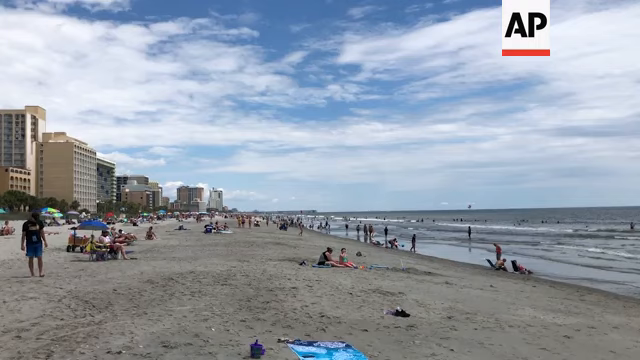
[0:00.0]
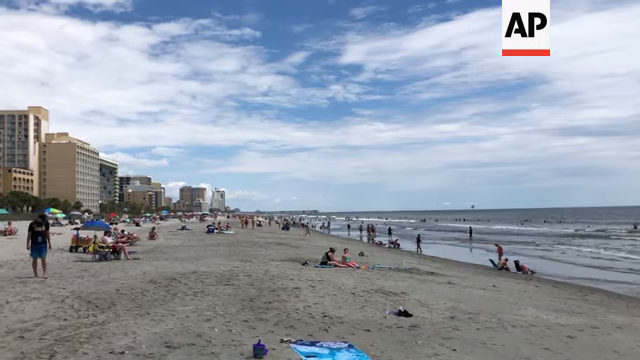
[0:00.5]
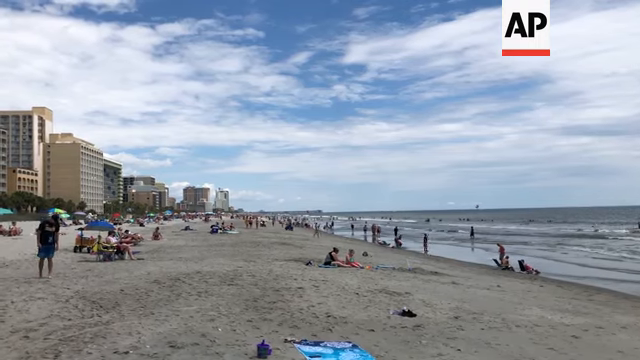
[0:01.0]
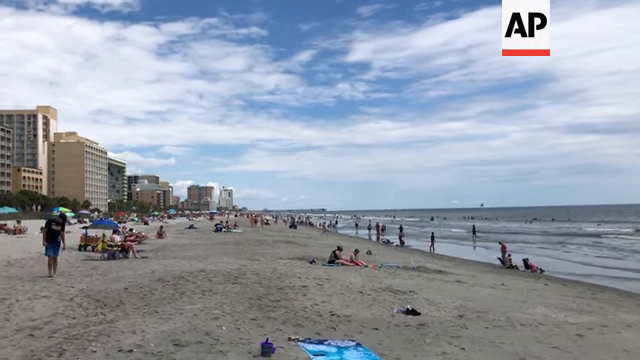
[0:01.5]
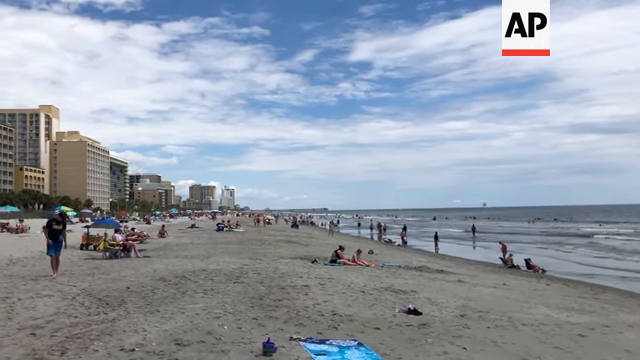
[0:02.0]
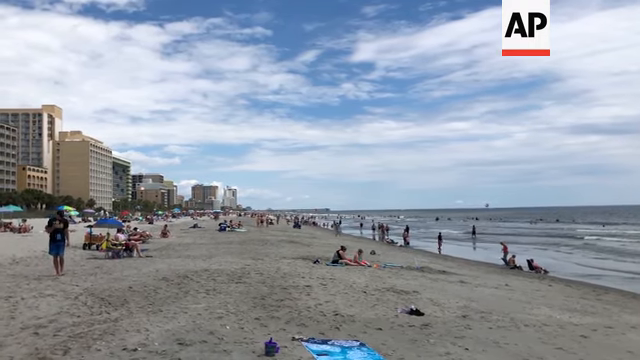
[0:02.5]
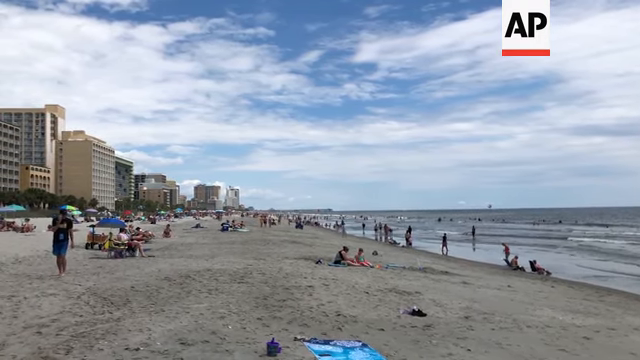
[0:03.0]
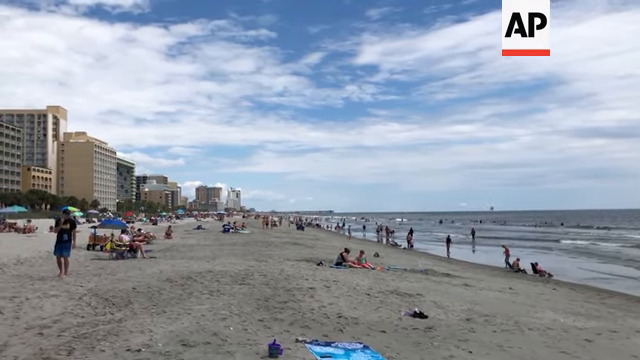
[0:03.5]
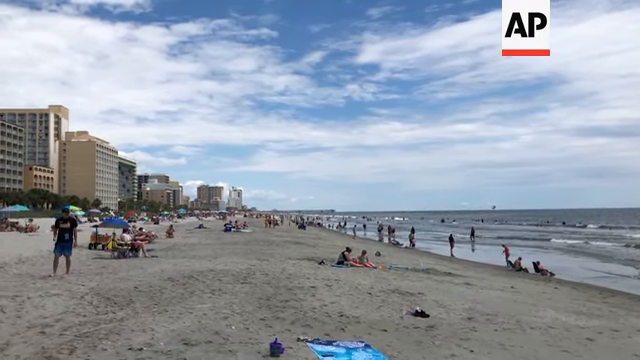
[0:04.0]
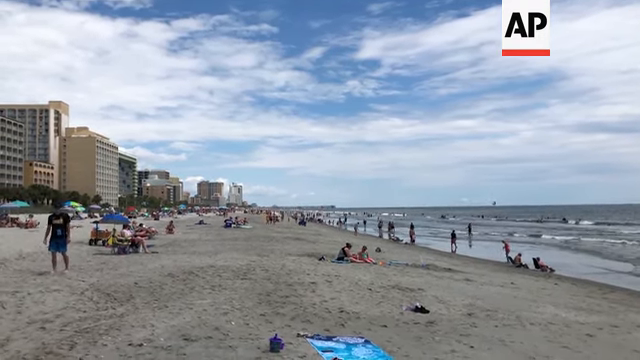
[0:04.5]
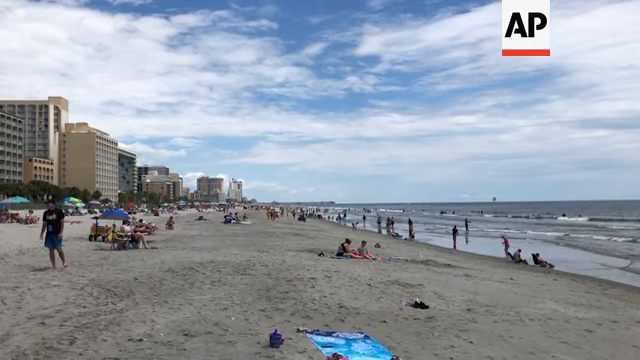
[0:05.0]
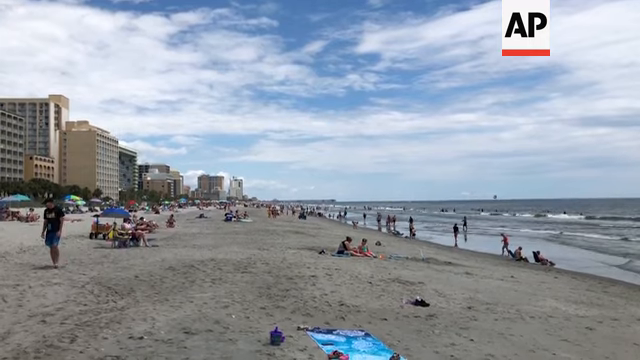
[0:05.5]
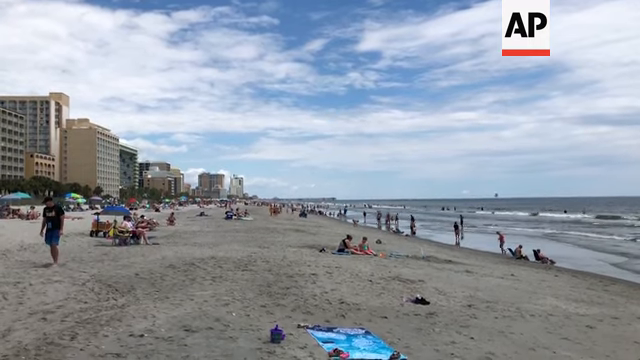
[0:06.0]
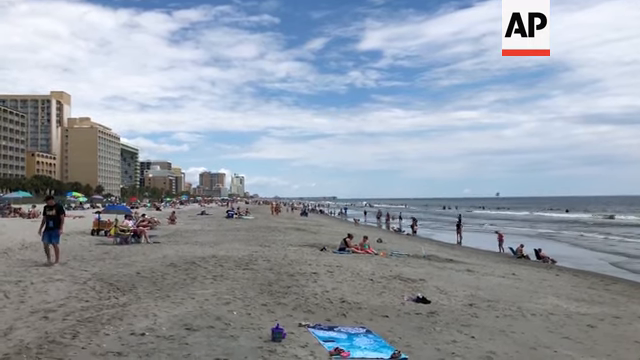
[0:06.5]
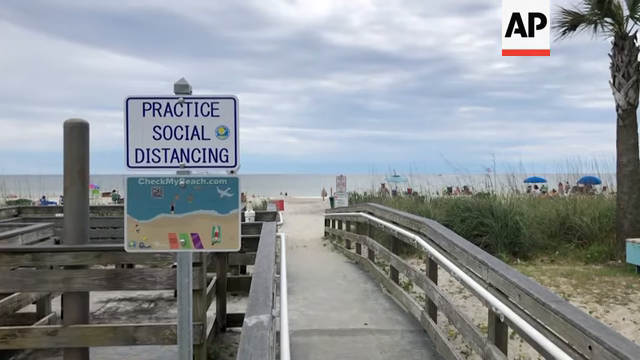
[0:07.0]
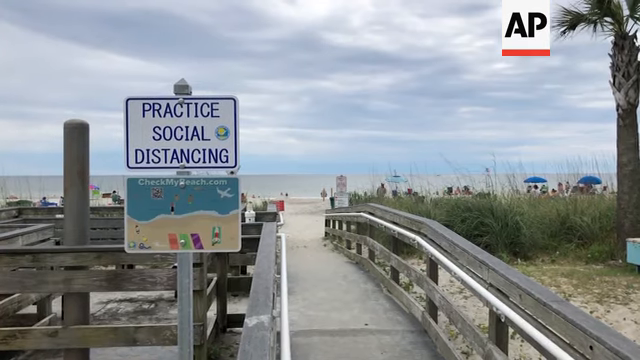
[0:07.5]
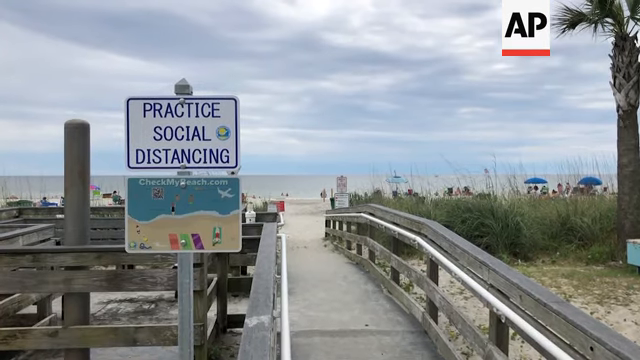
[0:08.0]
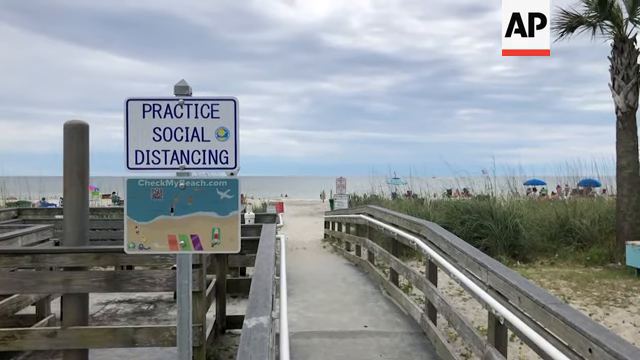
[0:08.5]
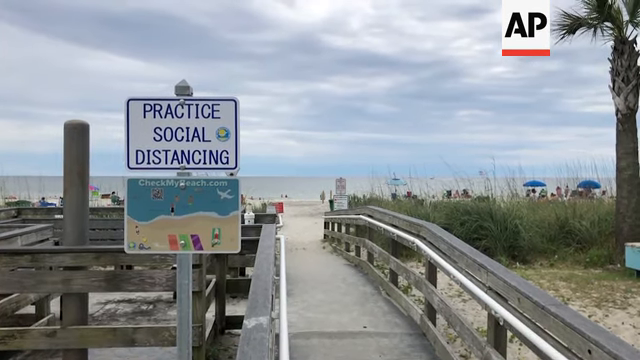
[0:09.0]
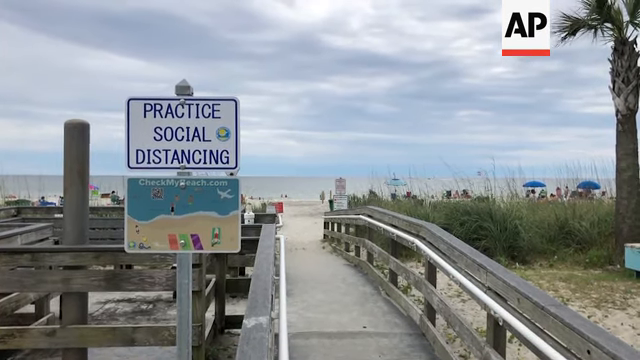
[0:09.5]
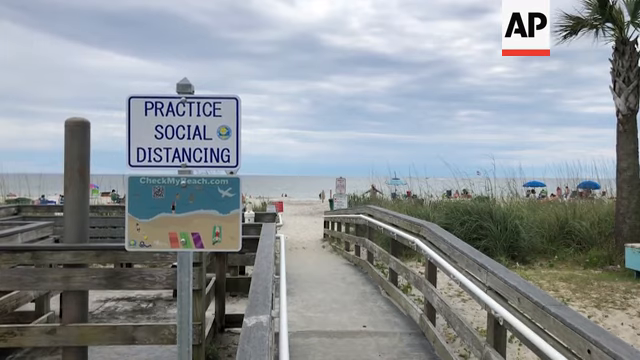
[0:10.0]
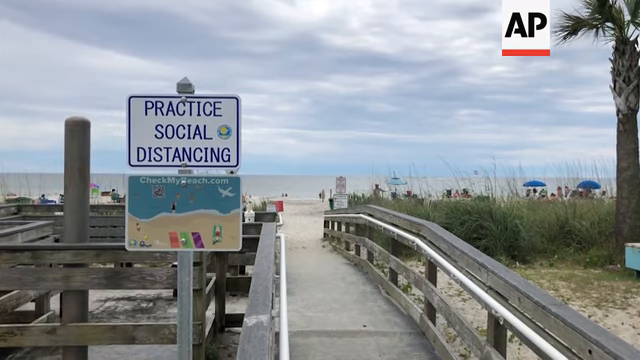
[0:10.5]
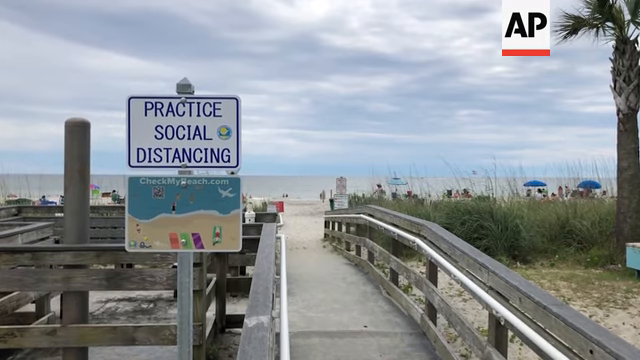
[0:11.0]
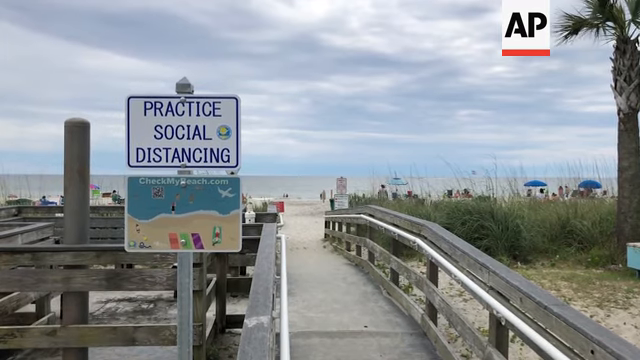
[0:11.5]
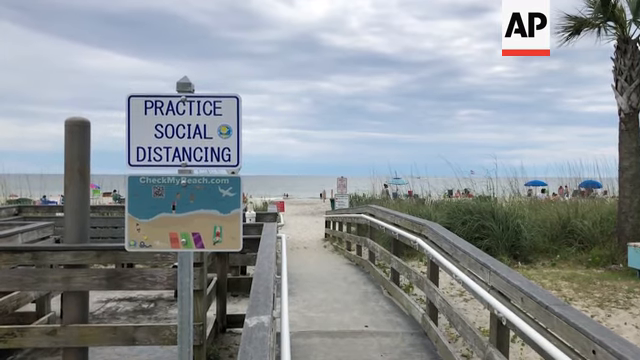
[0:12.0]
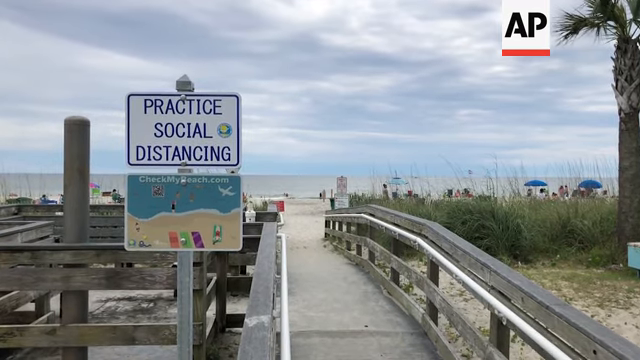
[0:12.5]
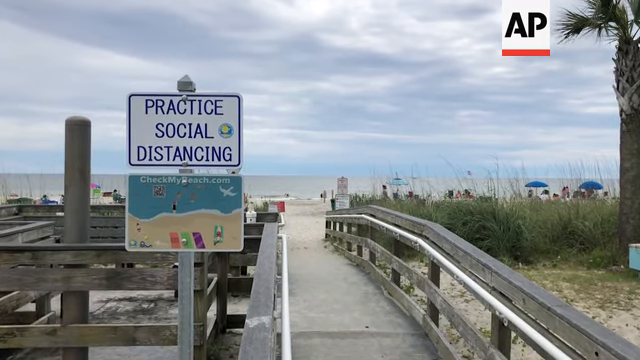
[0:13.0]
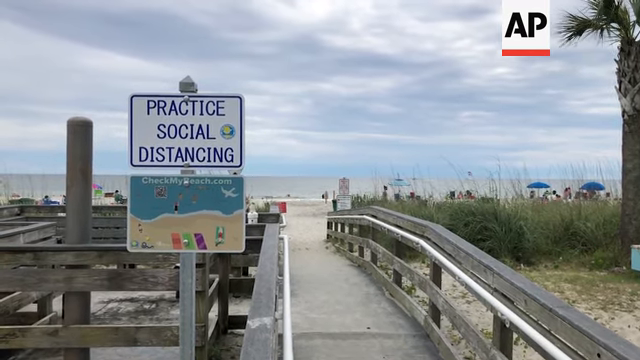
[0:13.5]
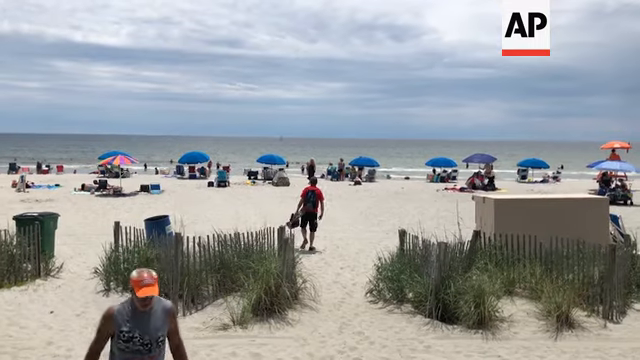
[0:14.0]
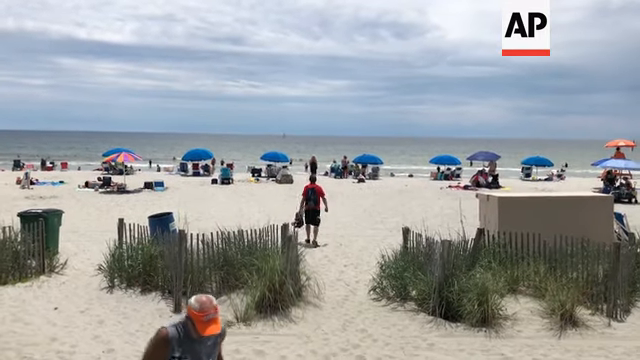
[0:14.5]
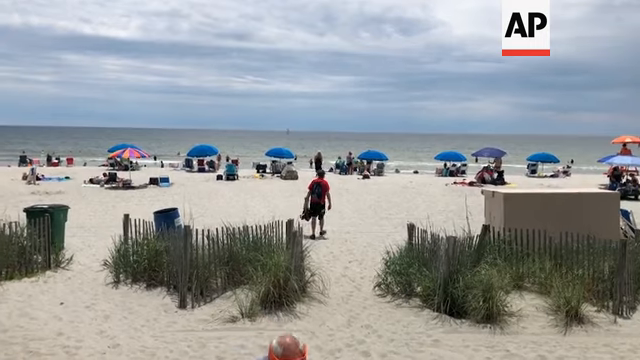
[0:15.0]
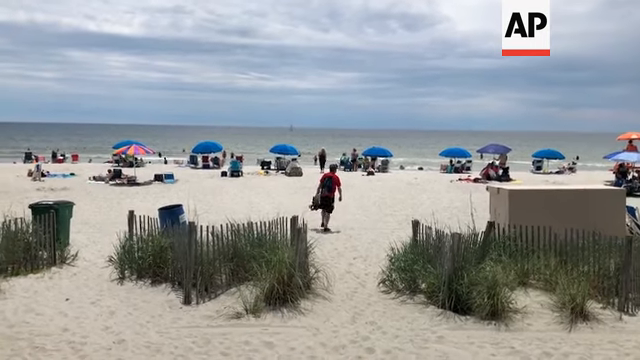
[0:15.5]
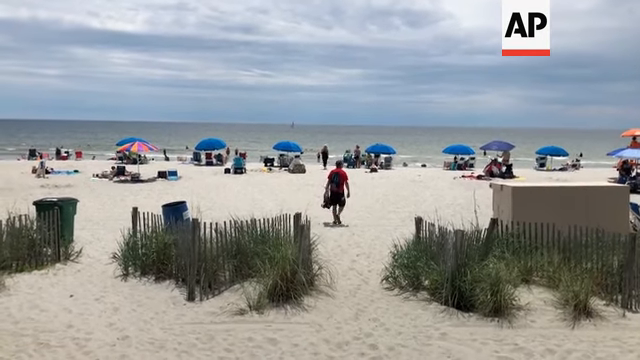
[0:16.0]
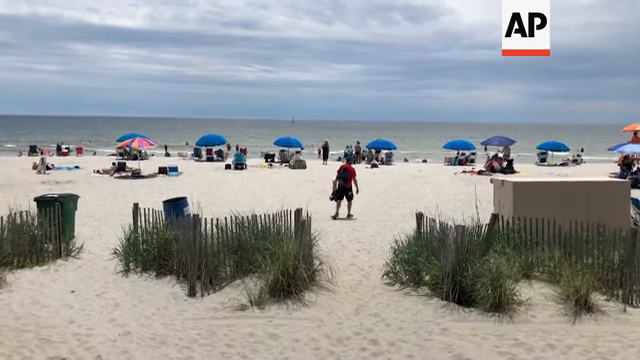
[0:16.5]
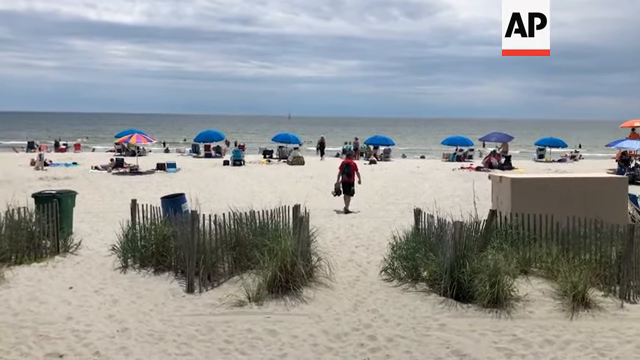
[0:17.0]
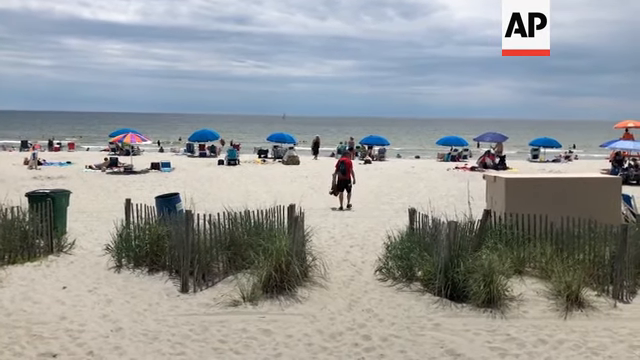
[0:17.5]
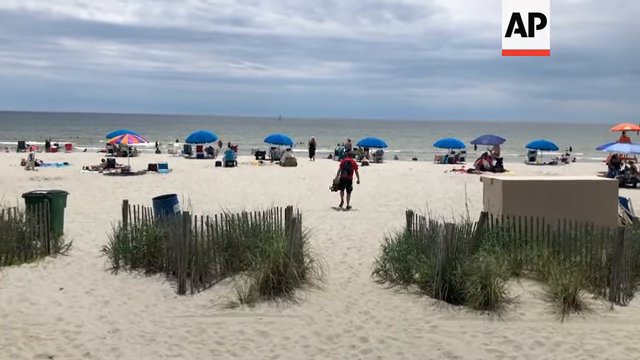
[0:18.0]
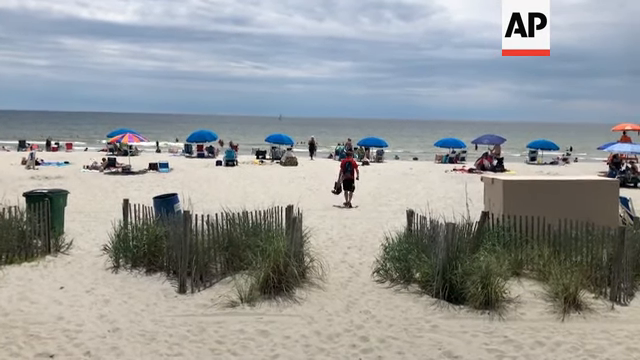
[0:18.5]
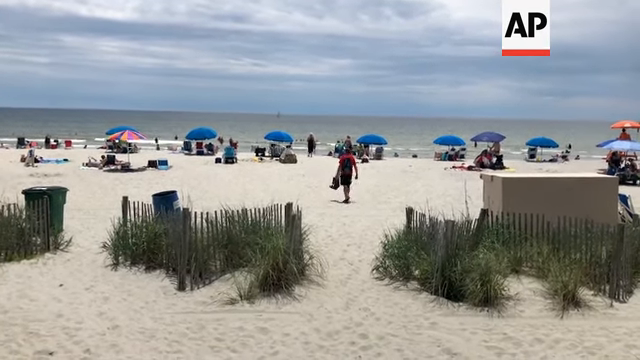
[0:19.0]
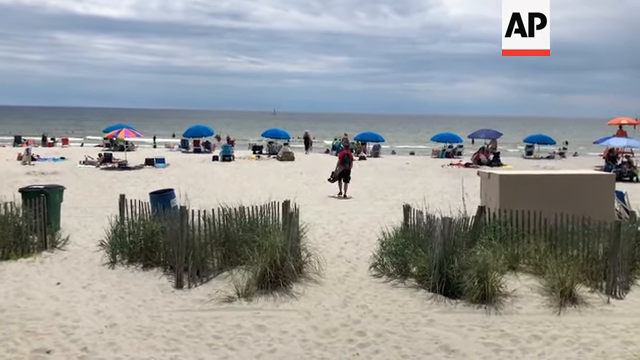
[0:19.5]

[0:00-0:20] The video opens on a beach that looks like it is at low tide, with the waves subtly coming in. Many people are congregated on the sand, and in the background are resort buildings and high-rise buildings, possibly condominiums and hotels. The image pans from right to left, and the waves and people are moving. Another shot shows people walking around with a beach in the background, seen from a walking area, where a sign reads "practice social distancing." The scene transitions to people walking on the sand with the ocean in the background, looking out at the beach. An individual in a red shirt walks by, possibly carrying some type of seat he can sit on.